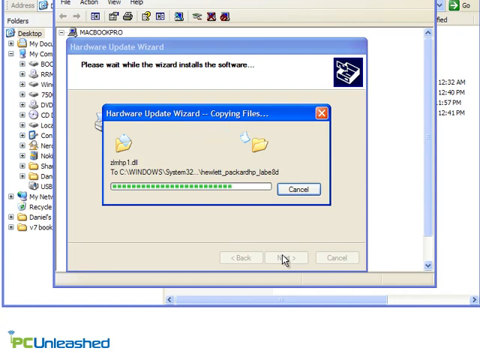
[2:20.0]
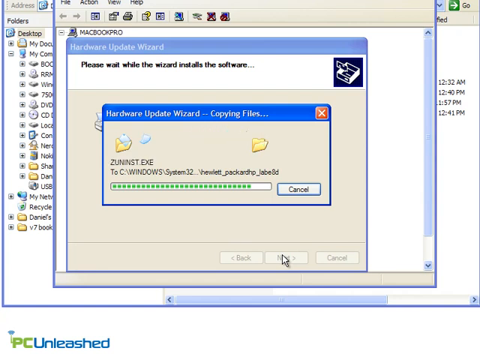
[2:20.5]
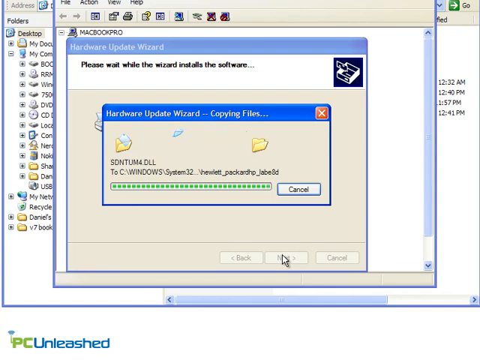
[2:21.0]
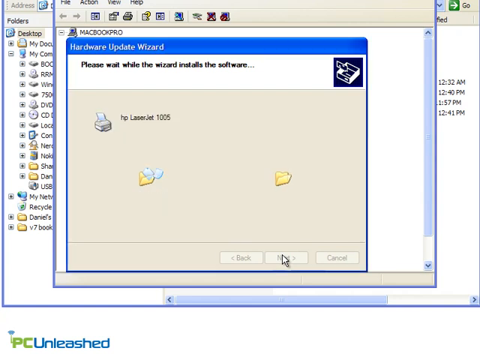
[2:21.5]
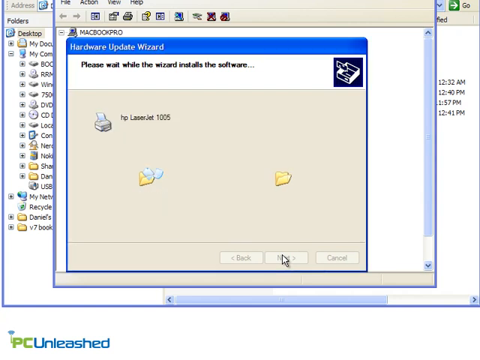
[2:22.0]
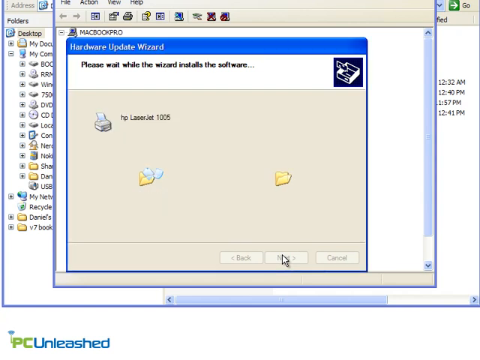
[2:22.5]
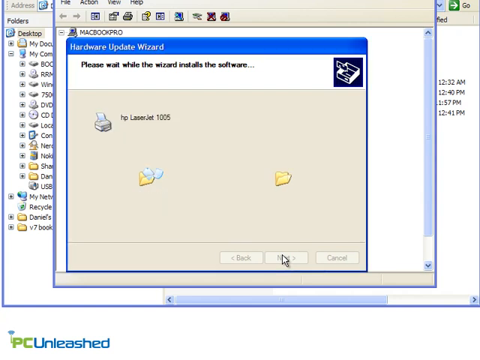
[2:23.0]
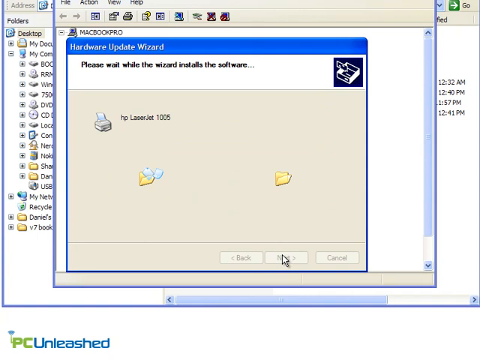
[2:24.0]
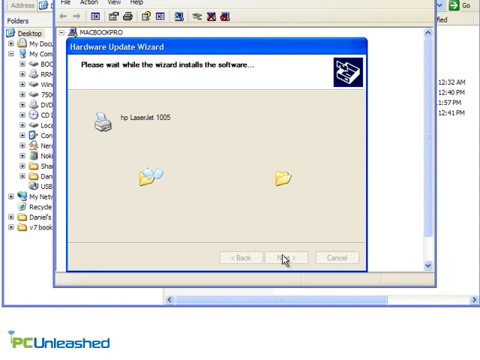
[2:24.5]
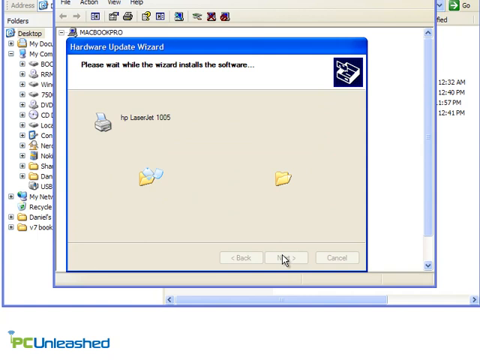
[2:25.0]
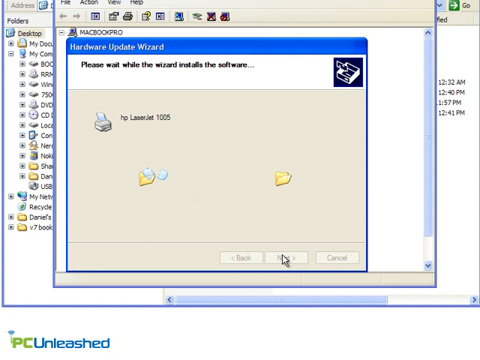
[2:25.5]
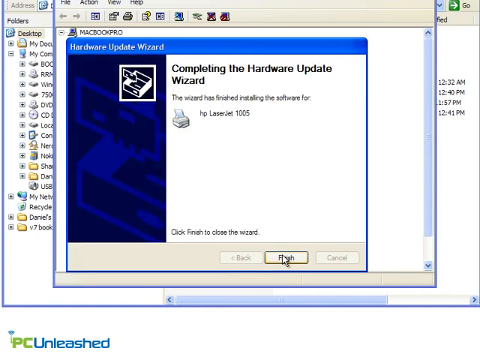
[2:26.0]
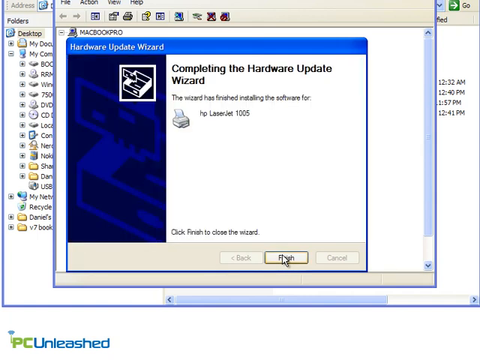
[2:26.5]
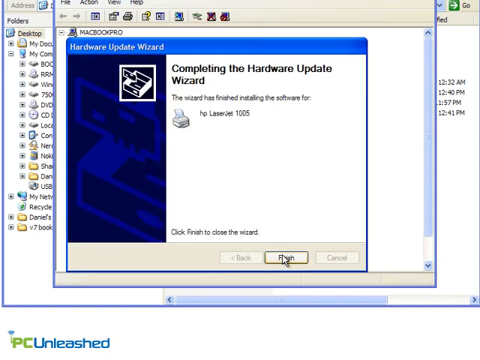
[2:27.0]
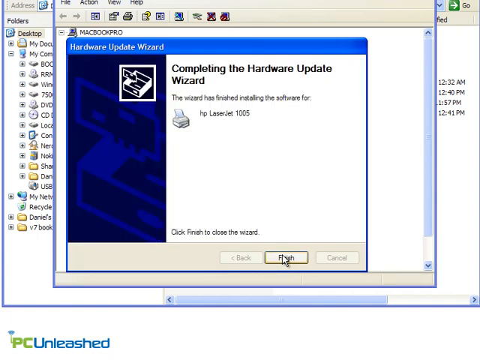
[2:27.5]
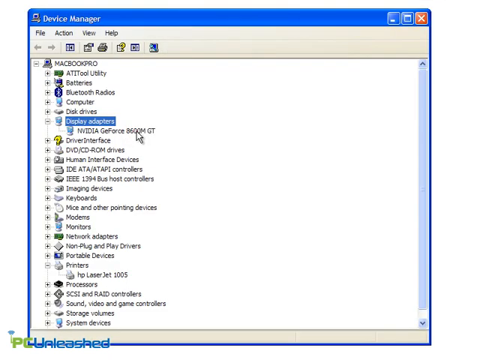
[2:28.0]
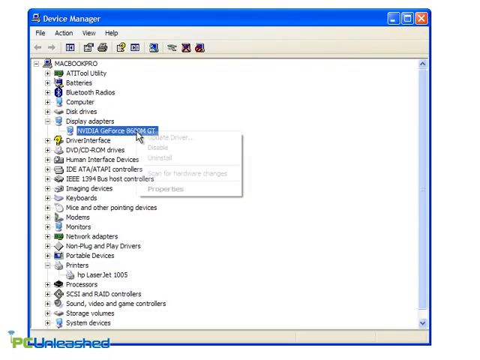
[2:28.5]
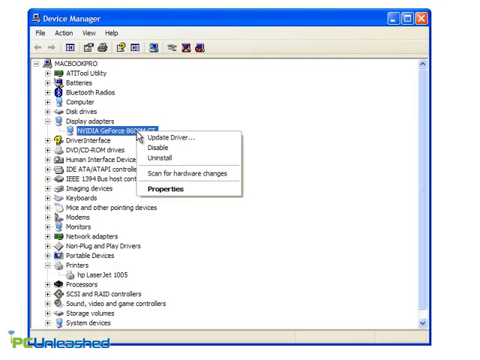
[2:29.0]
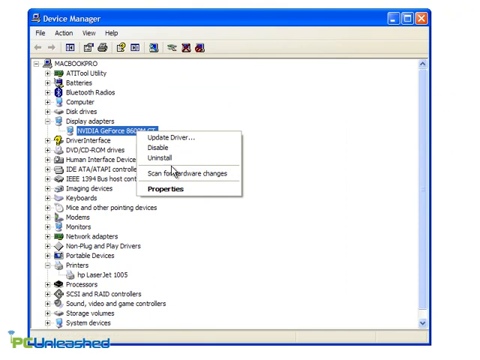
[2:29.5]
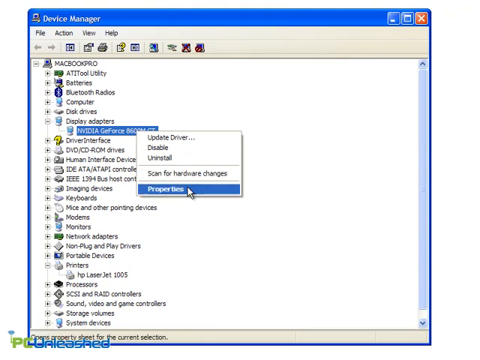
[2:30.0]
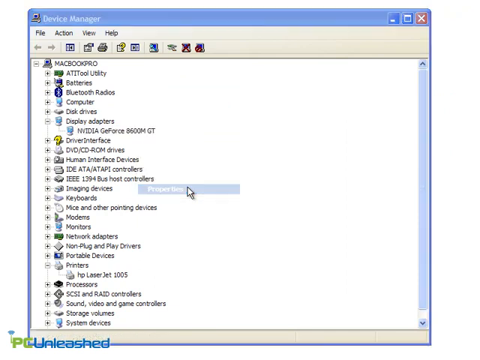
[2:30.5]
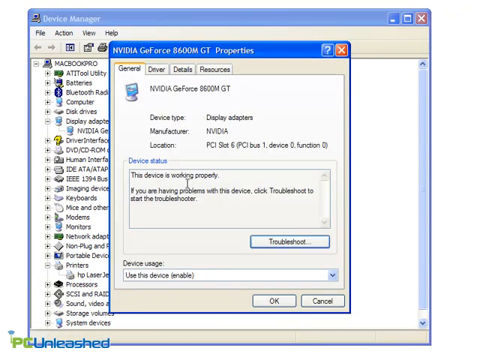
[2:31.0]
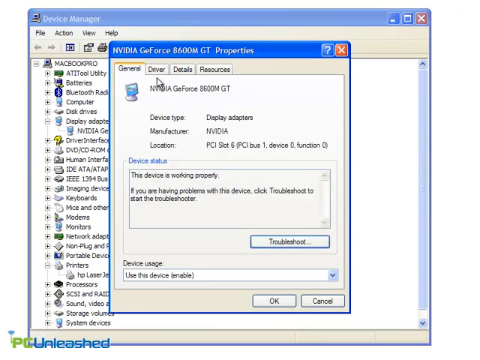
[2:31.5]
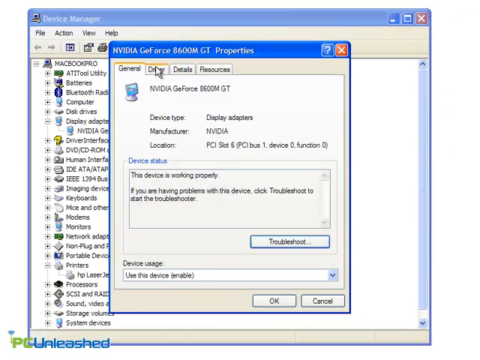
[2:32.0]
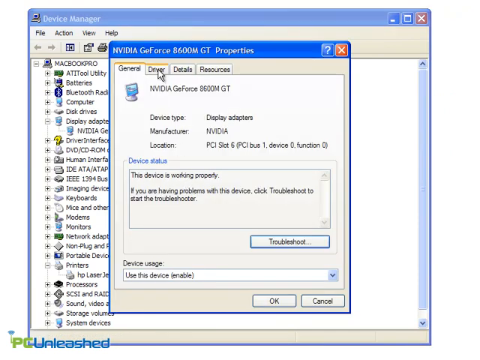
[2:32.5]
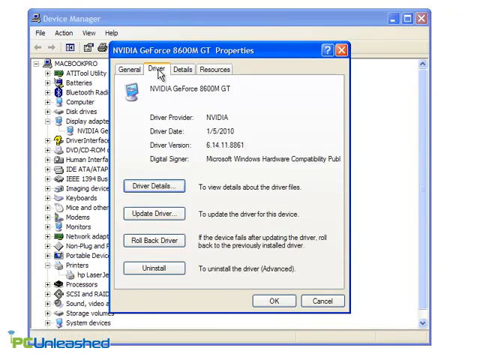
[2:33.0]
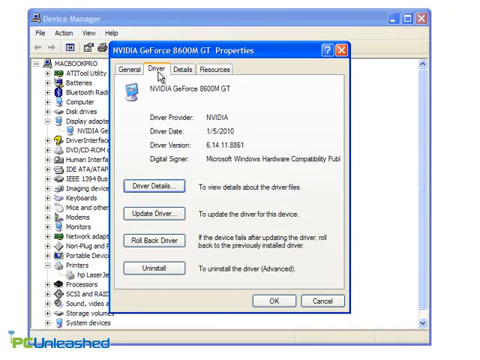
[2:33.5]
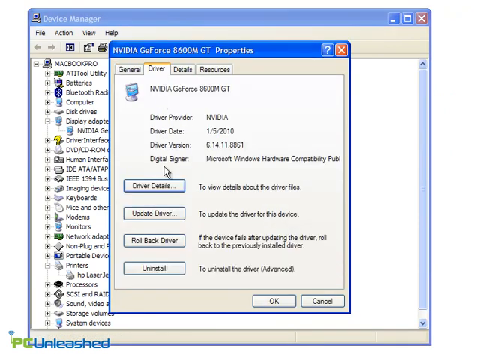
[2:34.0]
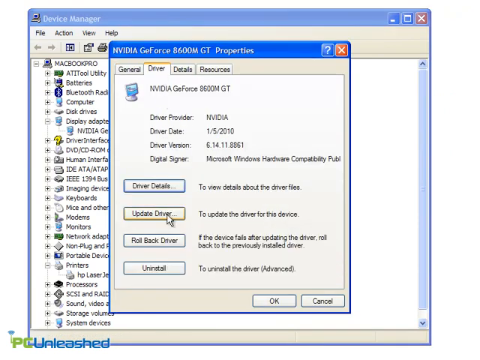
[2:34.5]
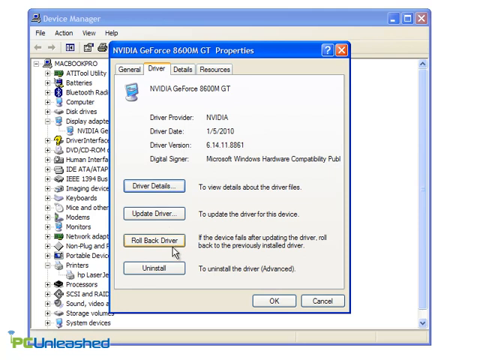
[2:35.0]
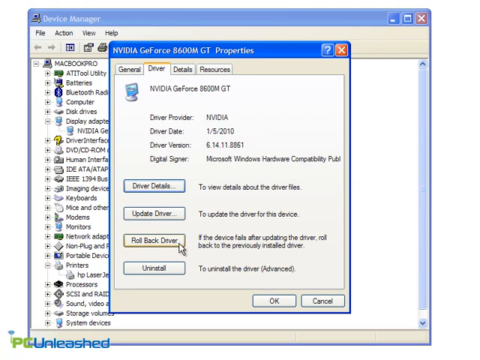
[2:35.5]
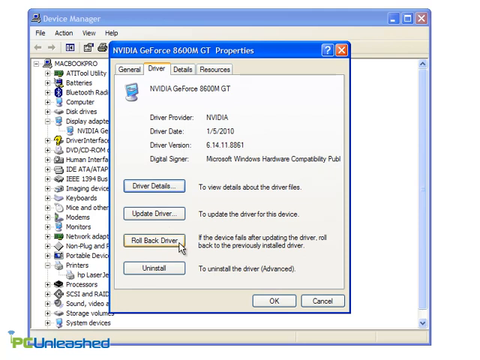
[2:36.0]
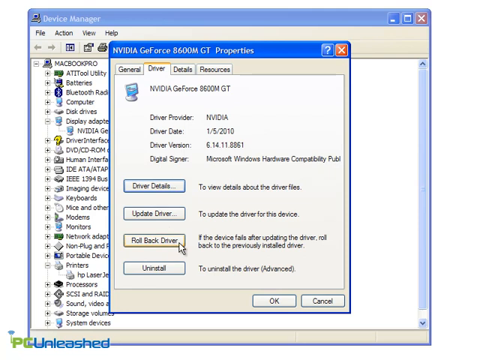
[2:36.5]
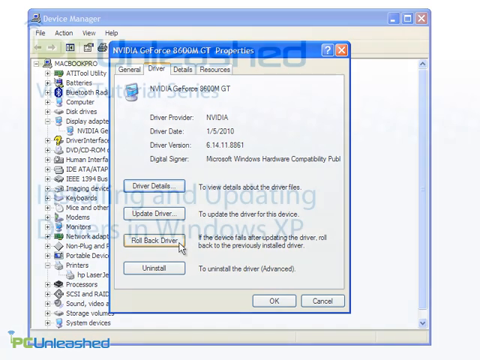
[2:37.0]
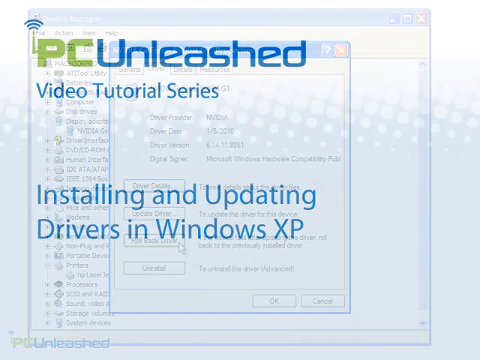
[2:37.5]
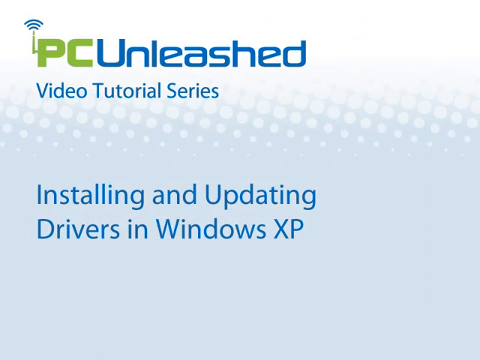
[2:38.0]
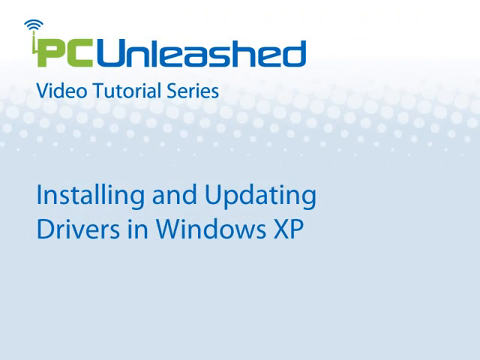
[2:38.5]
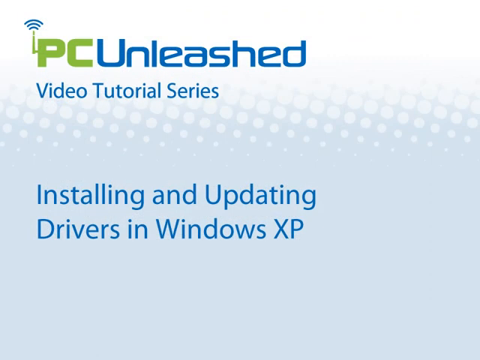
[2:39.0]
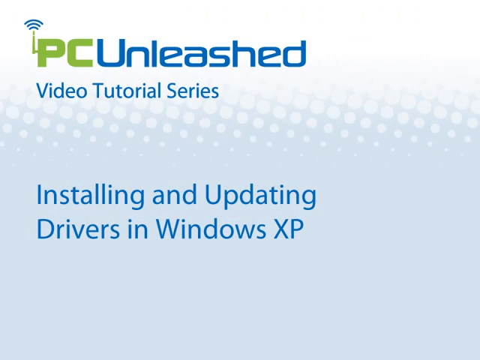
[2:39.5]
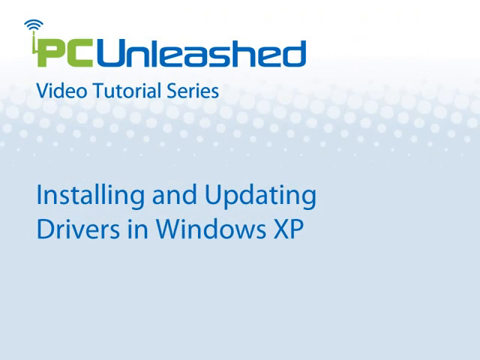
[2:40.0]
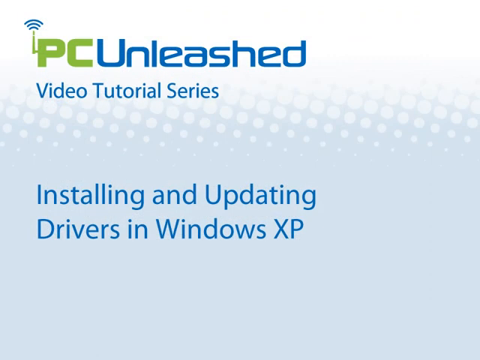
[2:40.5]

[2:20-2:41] The Hardware Update Wizard finishes successfully, showing a completion screen stating that the wizard has finished installing the software for the HP LaserJet 1005 and to click Finish to close the wizard. The user clicks Finish and returns to the Device Manager, where he opens Display adapters and sees an NVIDIA GeForce adapter. He right-clicks it, opens Properties and switches to the Driver tab, which shows the driver has been updated. He clicks Roll Back Driver, described as rolling back to the previously installed driver if the device fails after updating. Other options include Driver Details to view details about the driver files, Update Driver, and Uninstall. The video then goes to its end.